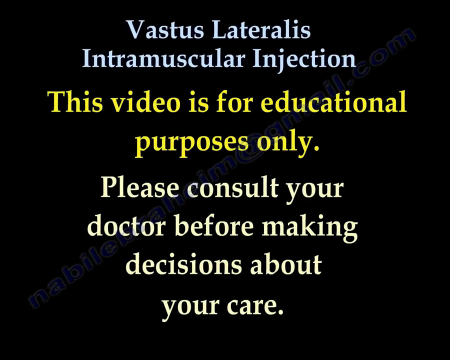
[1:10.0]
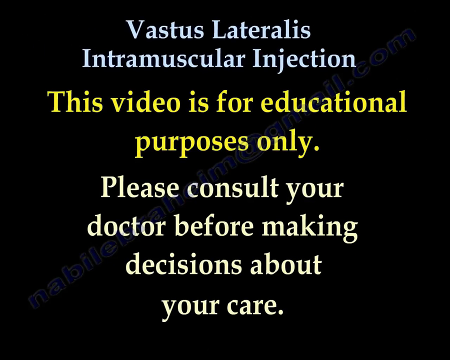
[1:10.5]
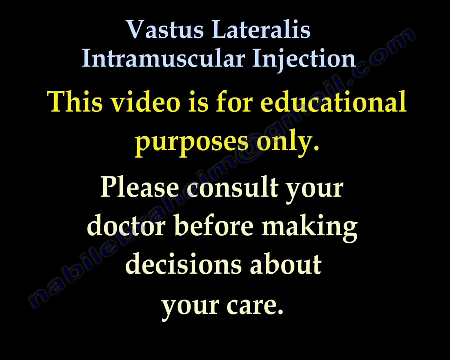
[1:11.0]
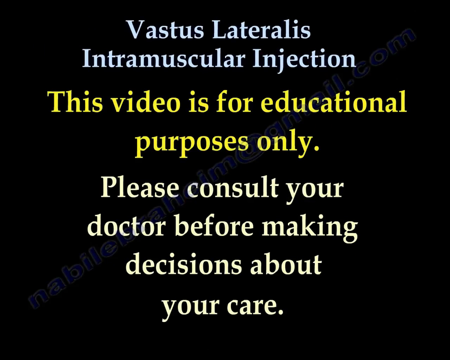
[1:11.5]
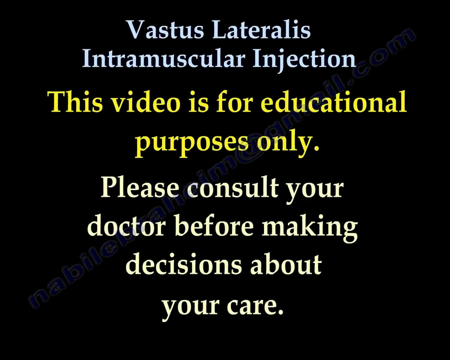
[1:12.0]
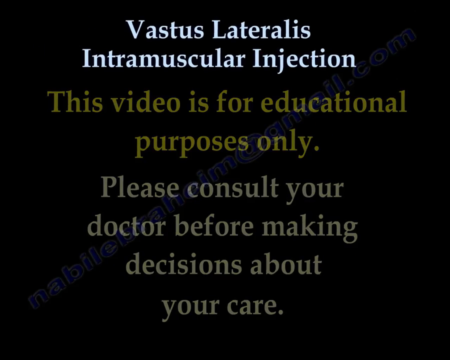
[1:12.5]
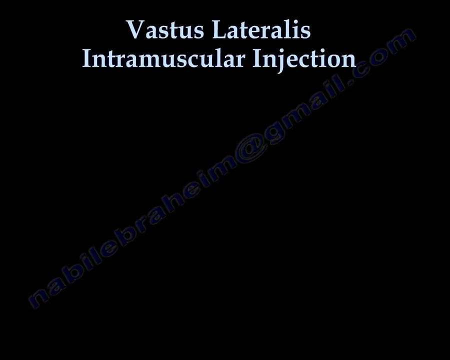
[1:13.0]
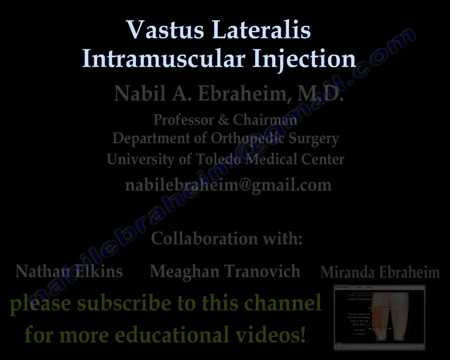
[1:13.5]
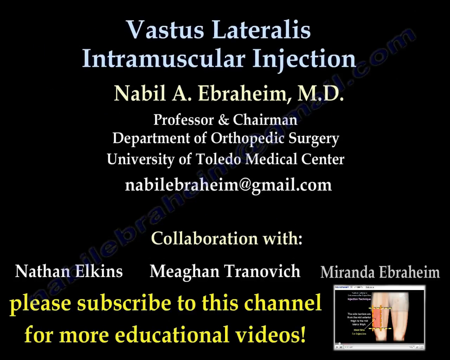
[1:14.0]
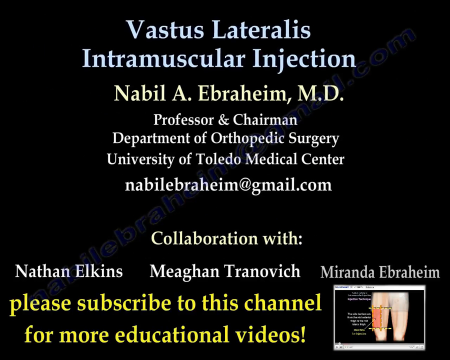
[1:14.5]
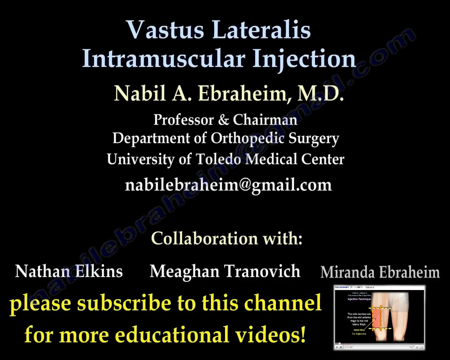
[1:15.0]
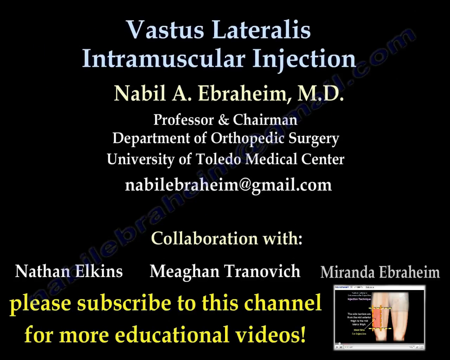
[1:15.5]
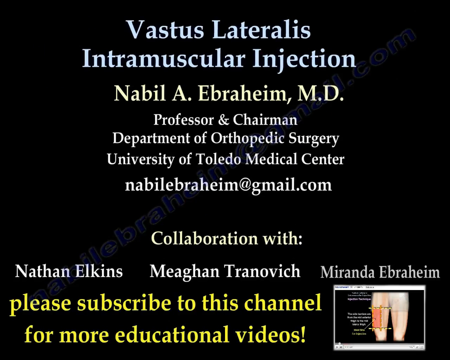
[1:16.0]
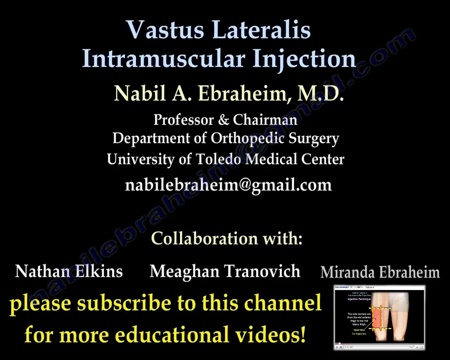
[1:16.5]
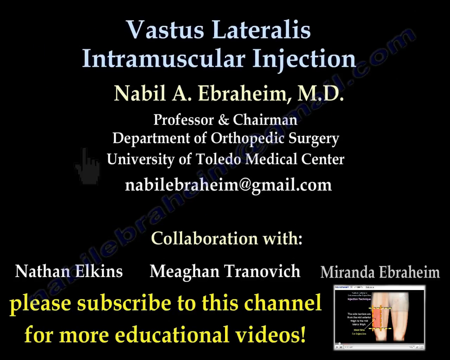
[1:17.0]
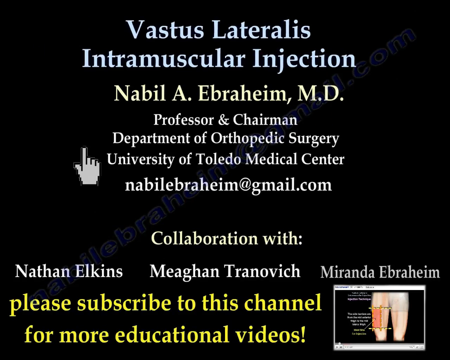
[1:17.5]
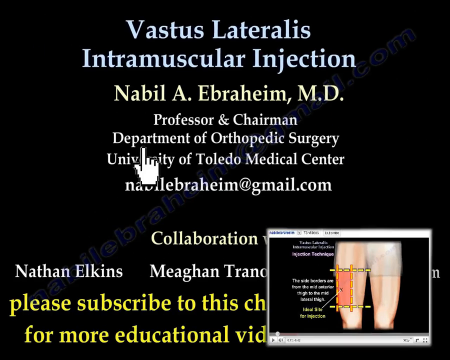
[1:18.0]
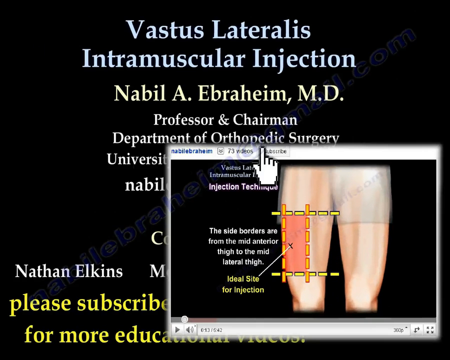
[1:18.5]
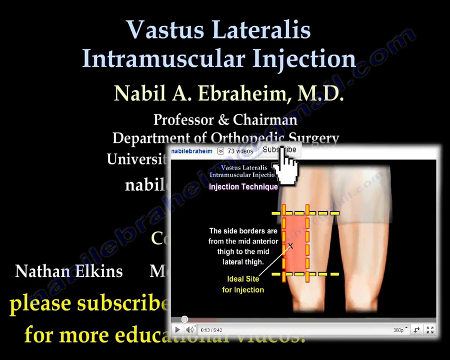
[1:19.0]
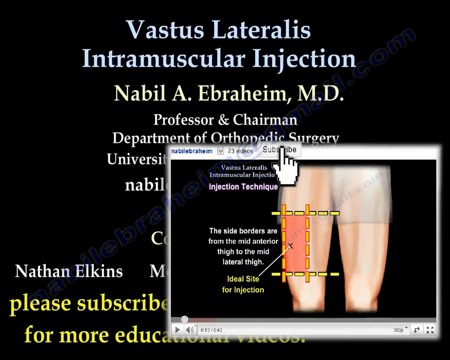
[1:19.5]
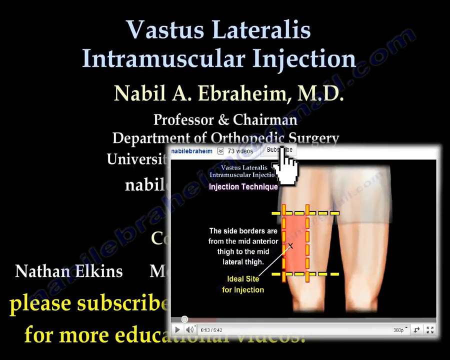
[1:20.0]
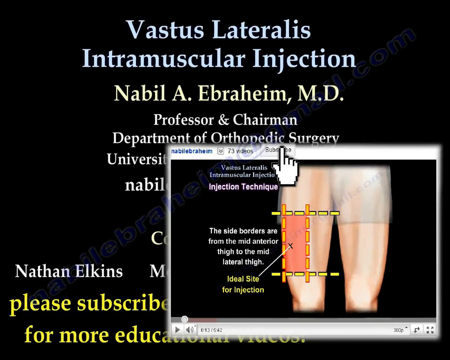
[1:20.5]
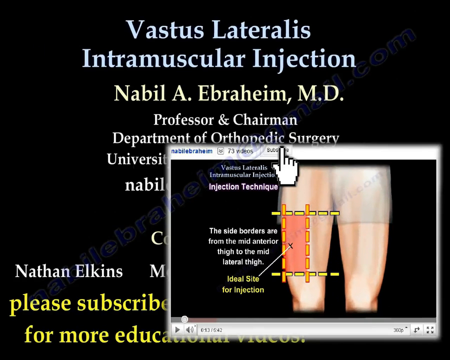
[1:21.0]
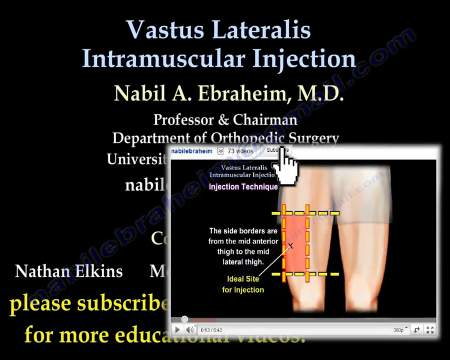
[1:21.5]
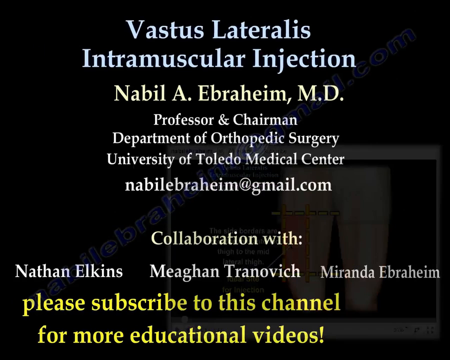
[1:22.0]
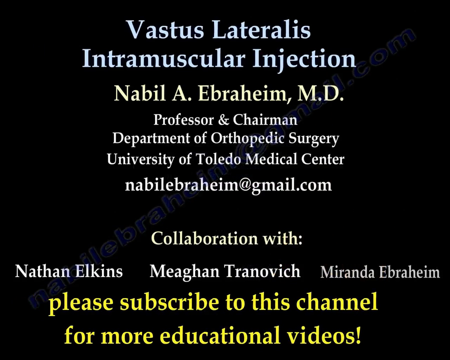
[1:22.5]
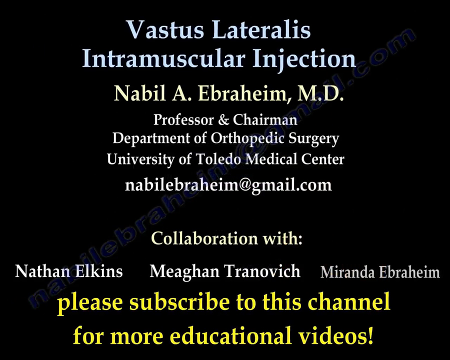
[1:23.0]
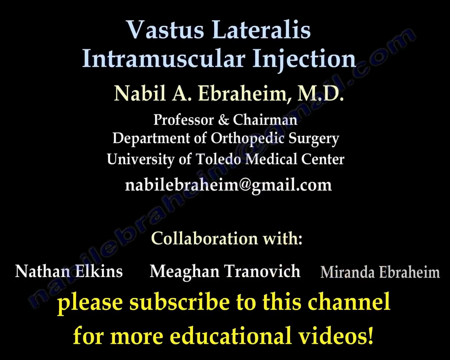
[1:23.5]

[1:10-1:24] The presentation comes to a close on the black title card screen. Blue text at the top reads "Vastus Lateralis", with the next line reading "Intramuscular Injection". Below that, in a larger yellow font, text reads "this video is for educational", and below that "Purposes Only". Below that, white text reads "please consult your", then on the next lines "doctor before making", "Decisions About" and "Your Care". The video then ends.